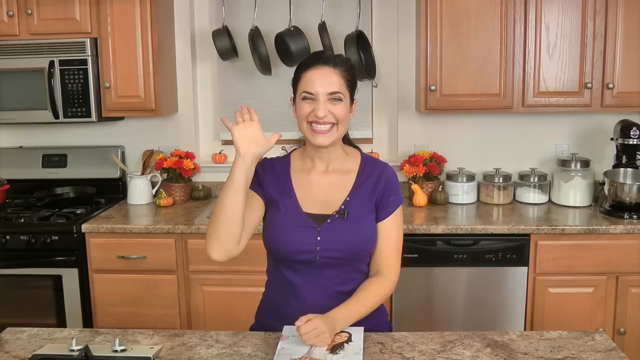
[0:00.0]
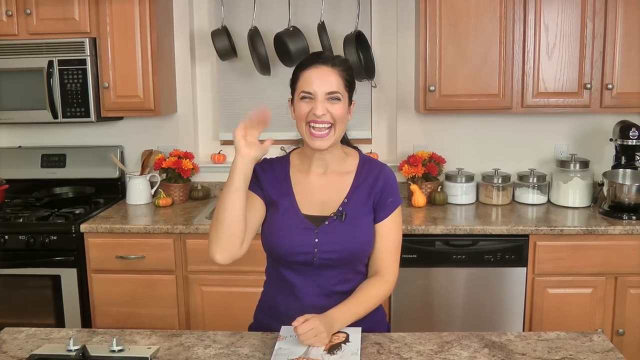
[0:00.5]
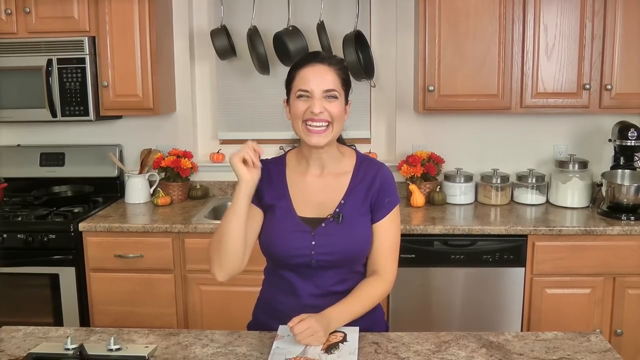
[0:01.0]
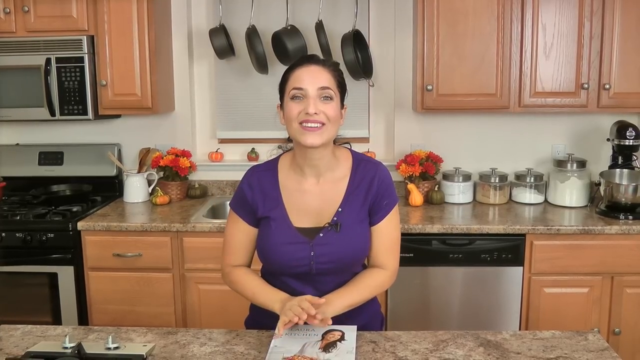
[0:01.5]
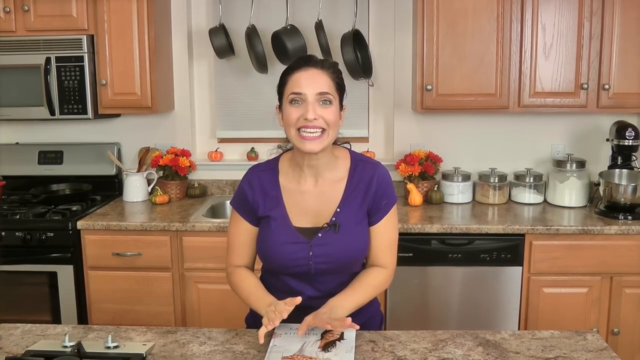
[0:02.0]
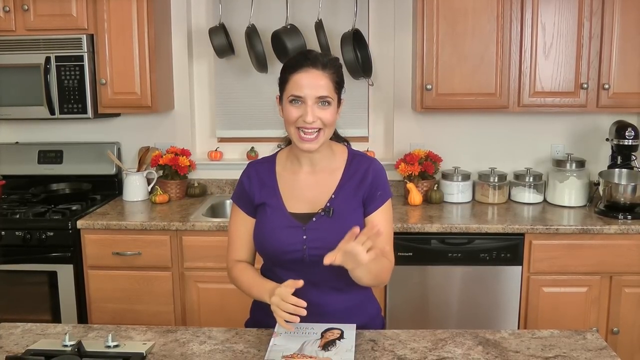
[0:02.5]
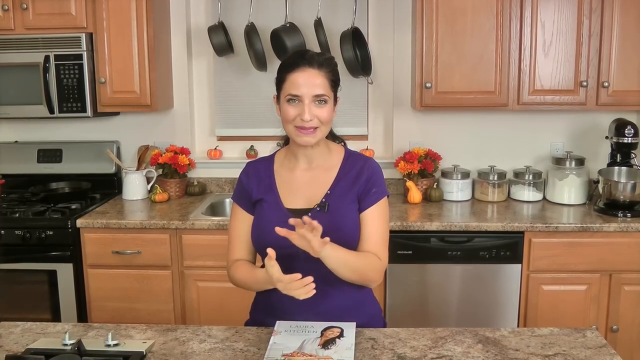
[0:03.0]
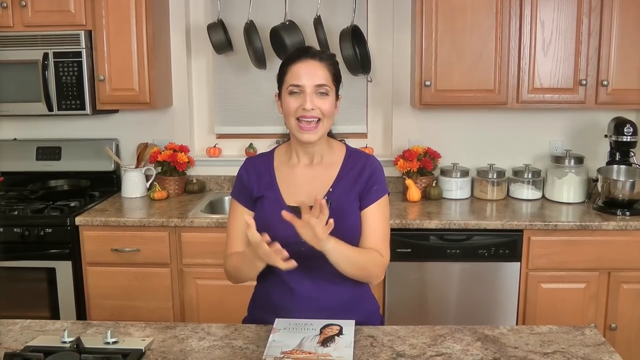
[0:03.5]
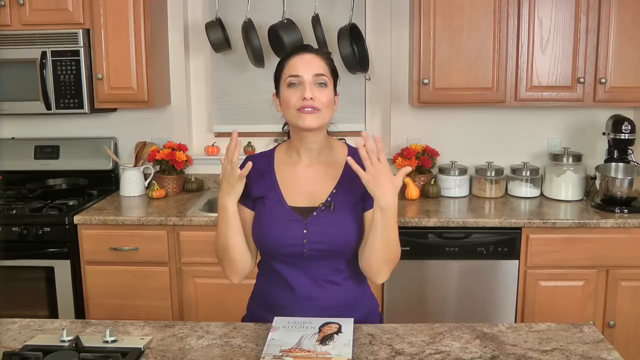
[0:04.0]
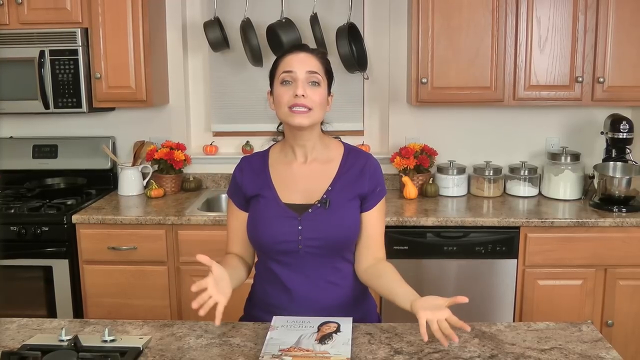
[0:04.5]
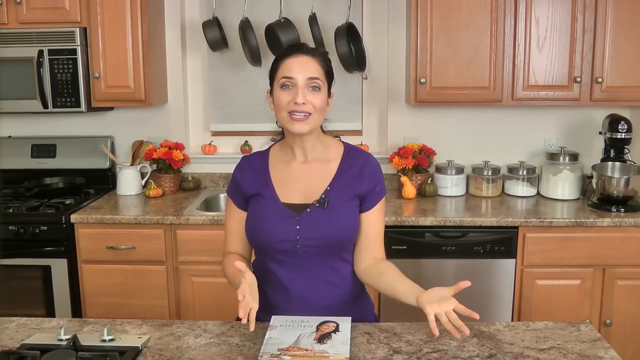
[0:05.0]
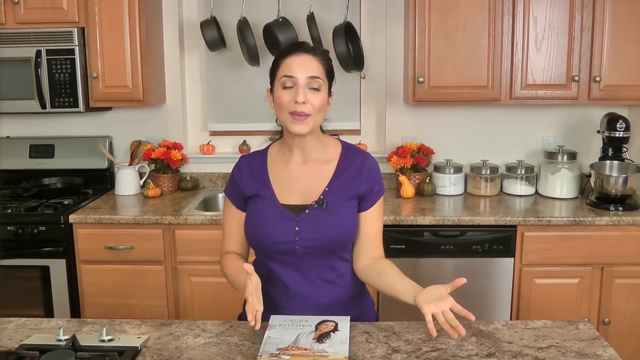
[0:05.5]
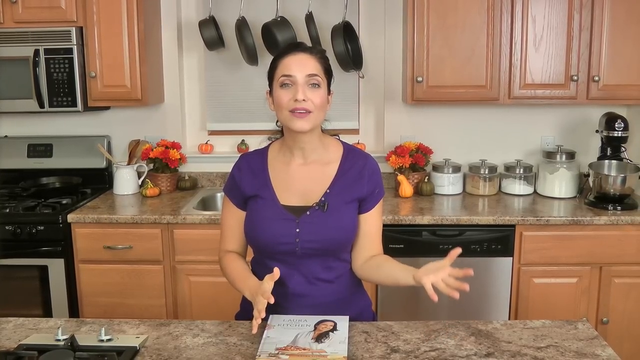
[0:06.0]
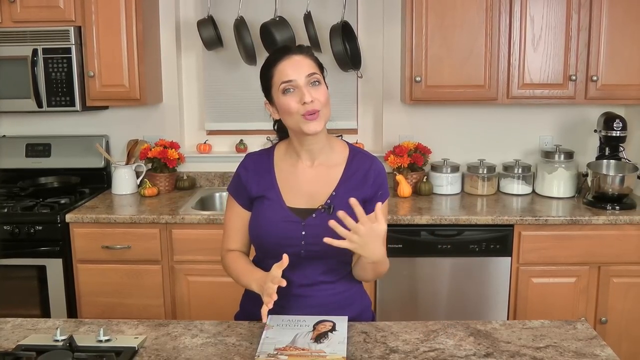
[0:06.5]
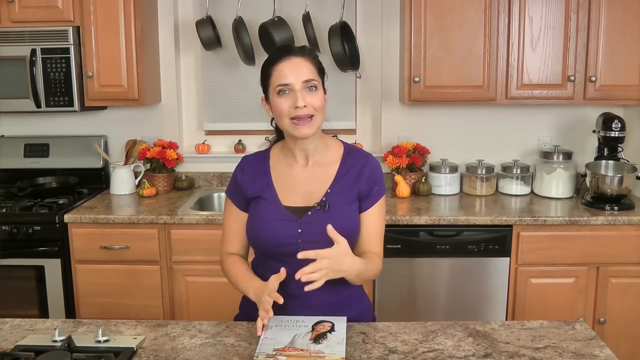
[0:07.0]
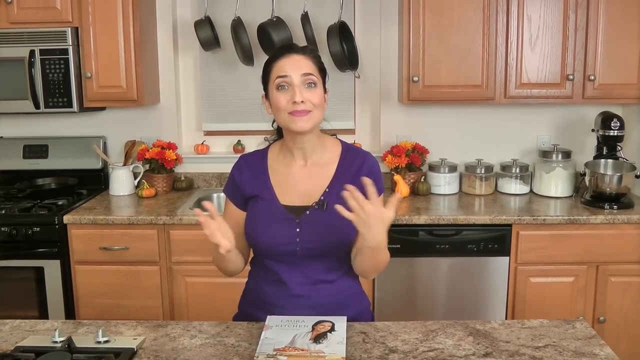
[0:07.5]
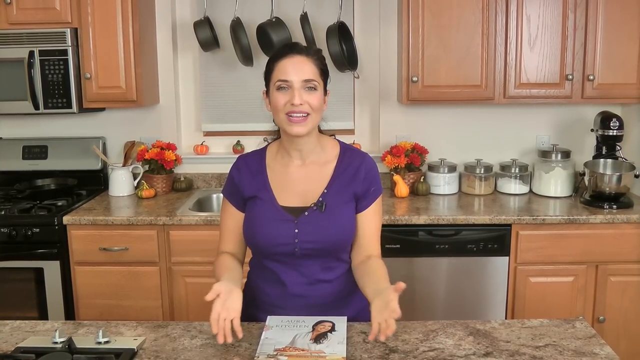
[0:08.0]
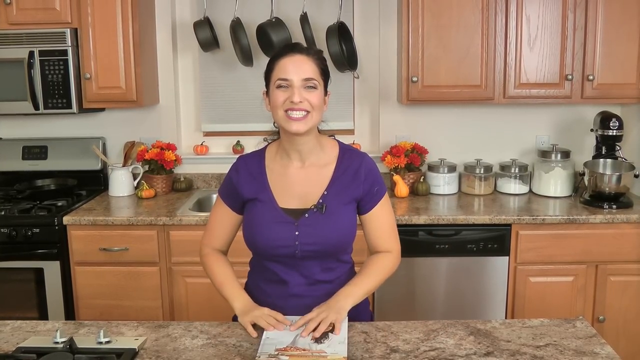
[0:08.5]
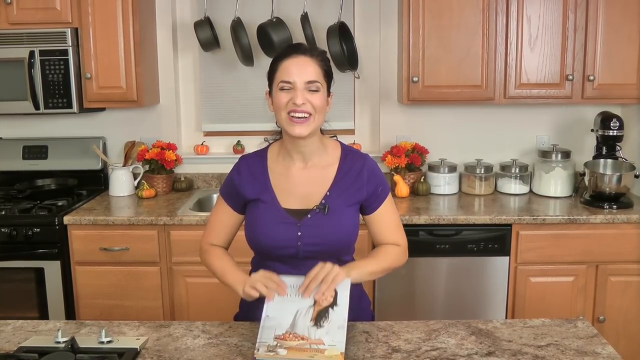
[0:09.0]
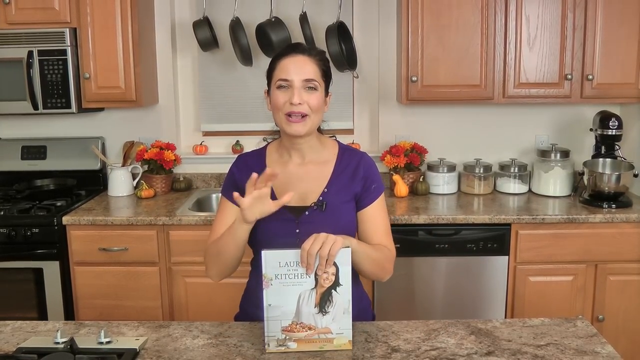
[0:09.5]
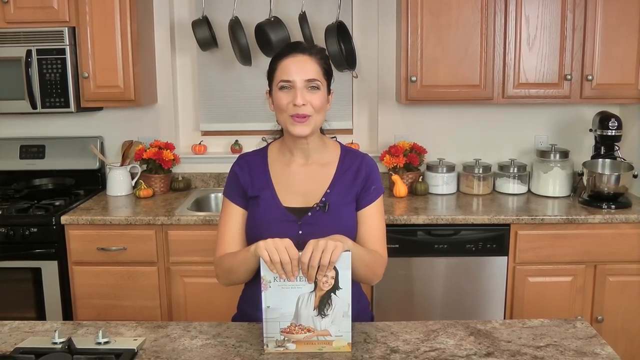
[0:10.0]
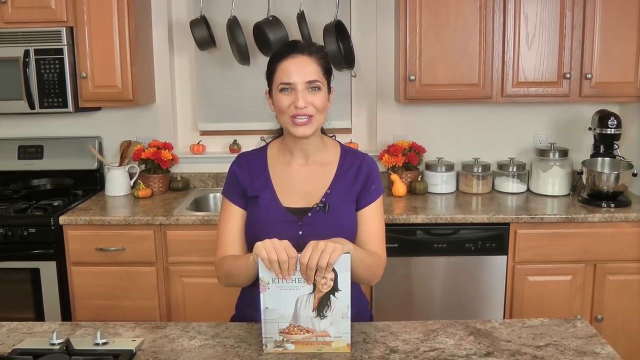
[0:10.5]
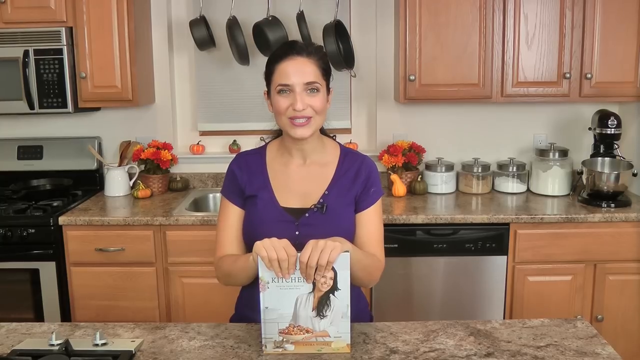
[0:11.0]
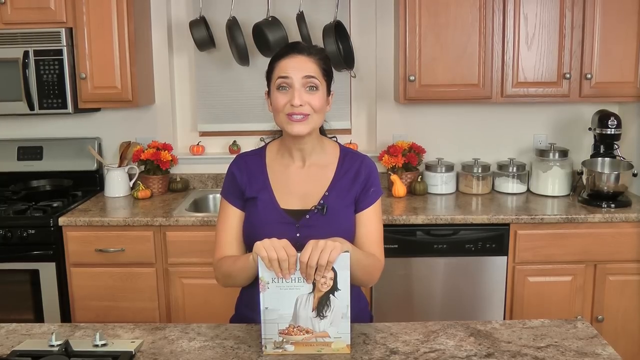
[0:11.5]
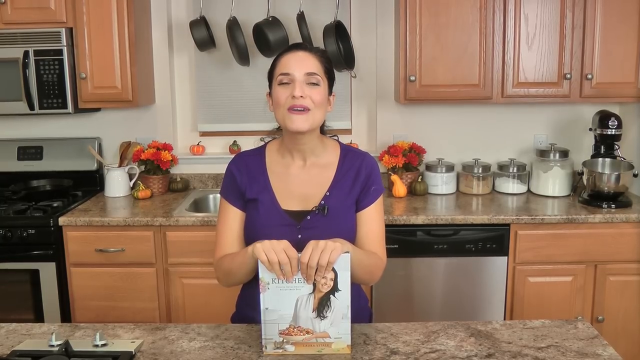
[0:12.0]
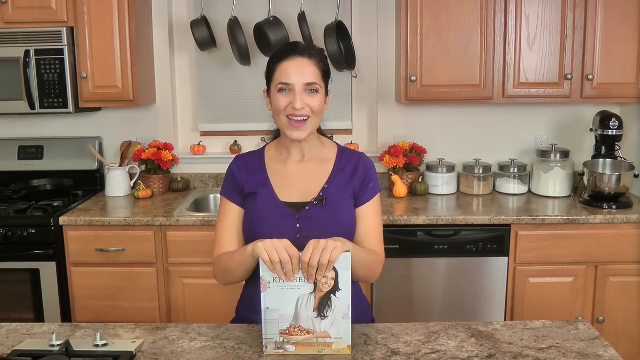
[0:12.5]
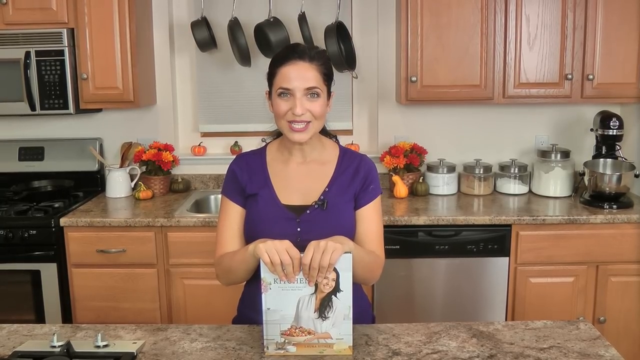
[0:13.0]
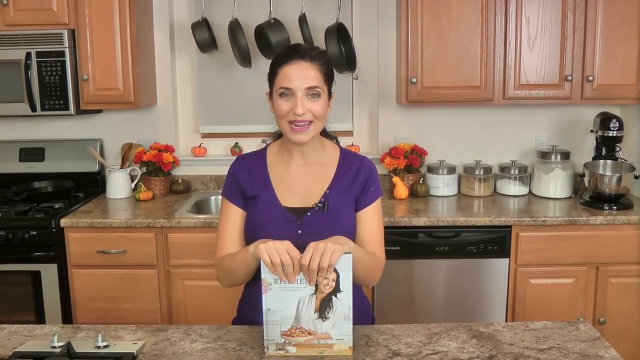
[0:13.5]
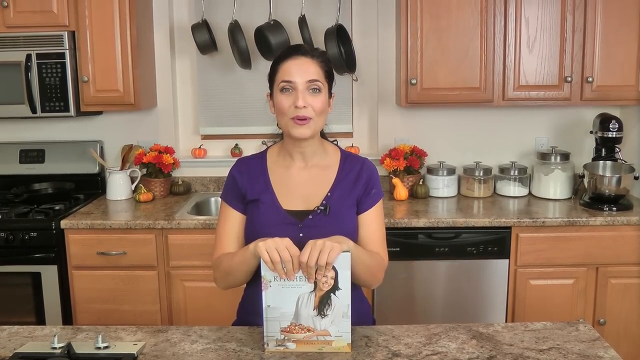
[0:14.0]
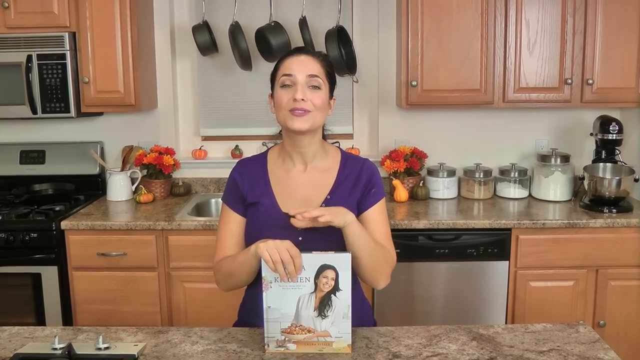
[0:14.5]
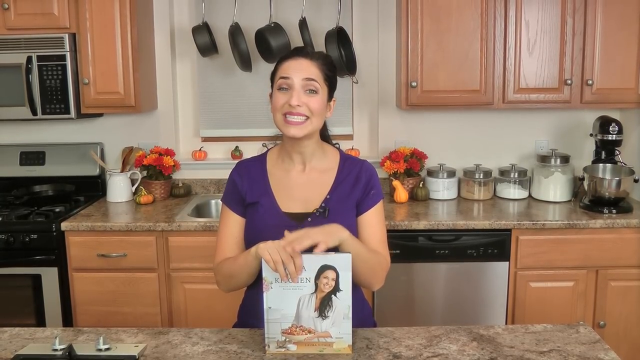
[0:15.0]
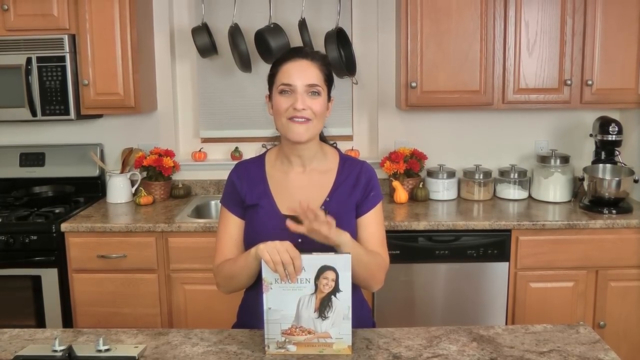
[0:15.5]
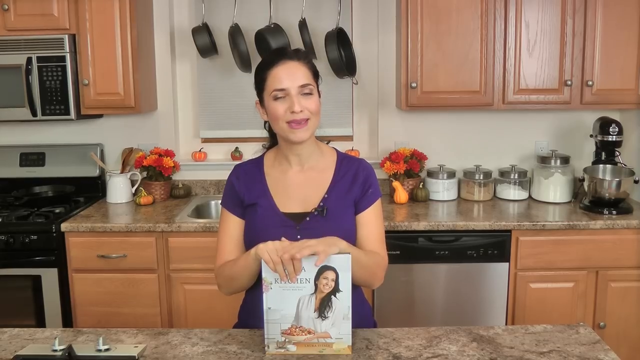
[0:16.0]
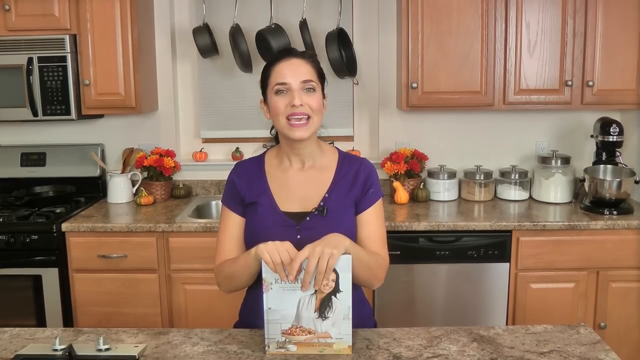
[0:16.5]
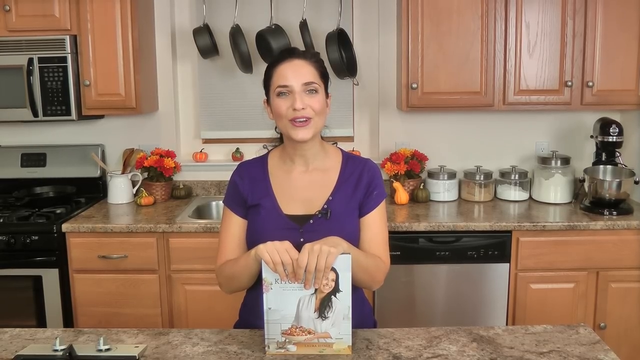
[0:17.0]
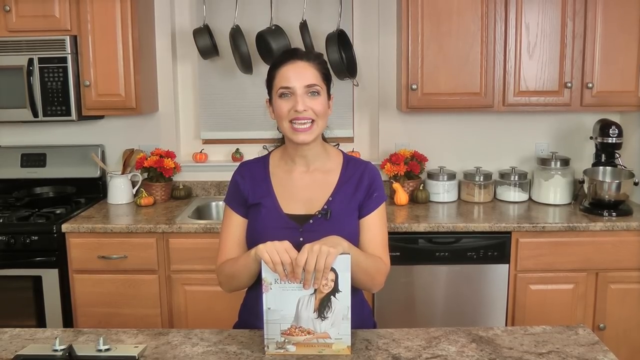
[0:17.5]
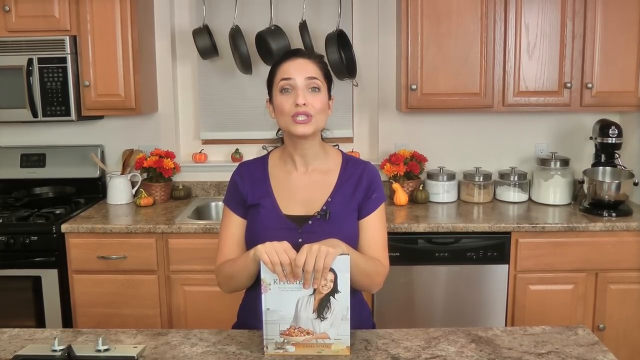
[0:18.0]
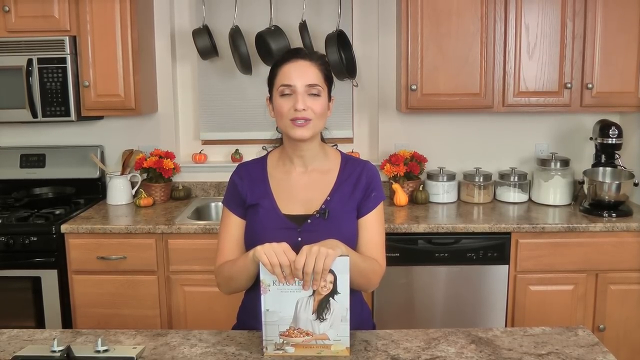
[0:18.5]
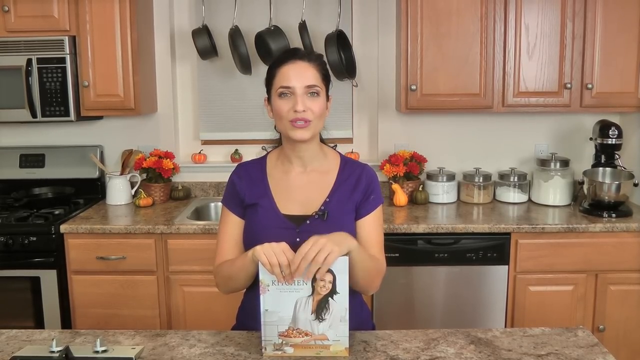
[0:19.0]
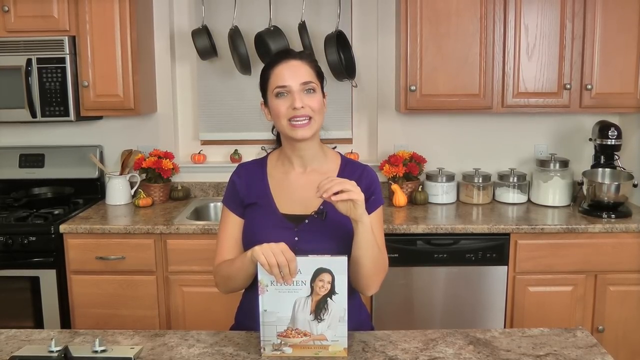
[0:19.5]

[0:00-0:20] A white woman with long hair tied up in a big wad smiles and looks happy. She wears a purple top with some black showing on it and pink lipstick, and she appears to be about 37 or 38 years old. She talks while using her hands. The background is a kitchen with pans on the walls, a microwave, a stove, decorative flowers on the table at the back, various spices in containers, and a mixing machine. The cupboards are brown and varnished, and there is a gold-coloured hand cream. In front of her is a table with a book, apparently a cookbook, whose front cover shows a woman with long hair.